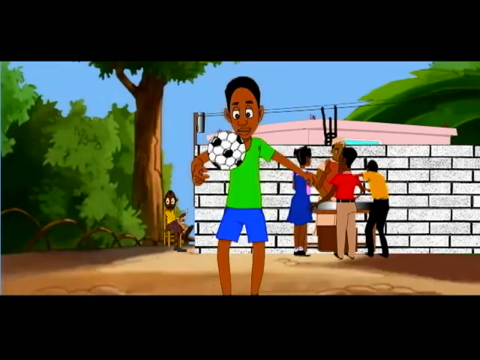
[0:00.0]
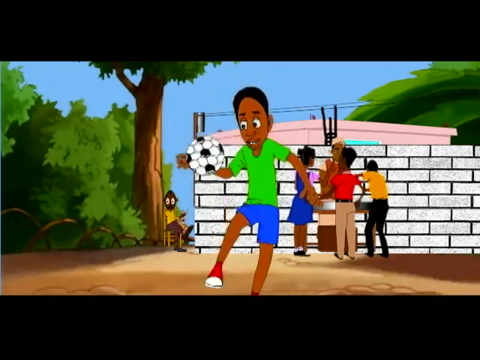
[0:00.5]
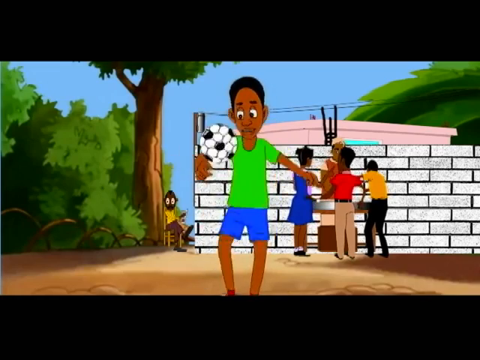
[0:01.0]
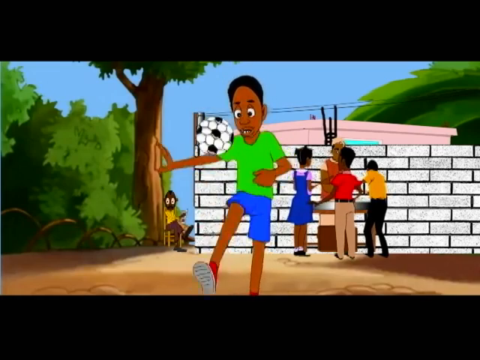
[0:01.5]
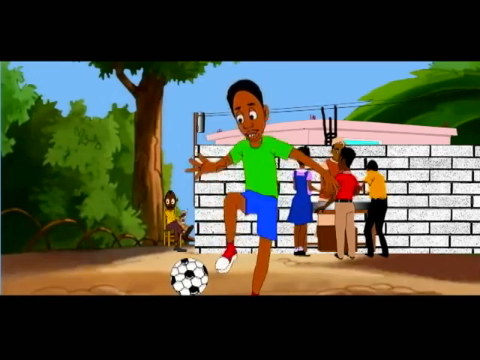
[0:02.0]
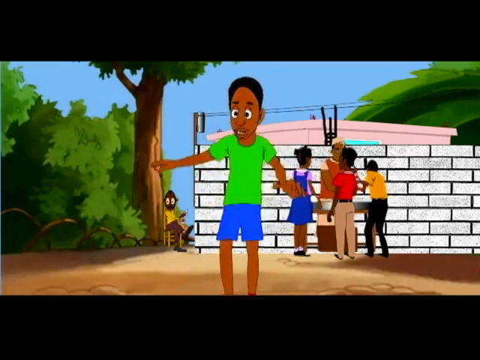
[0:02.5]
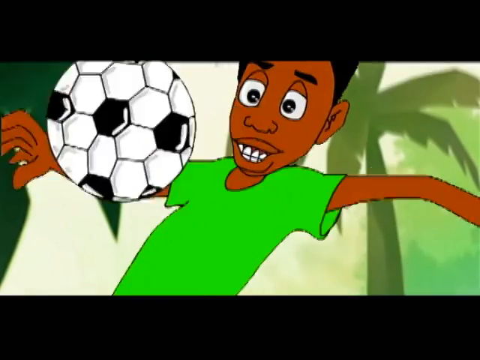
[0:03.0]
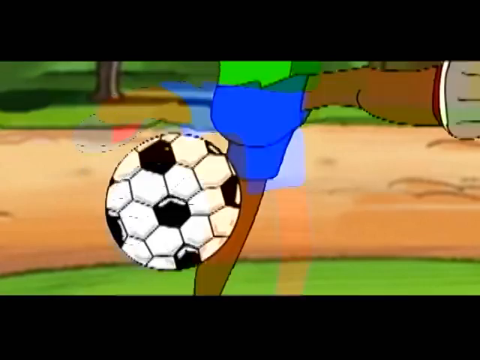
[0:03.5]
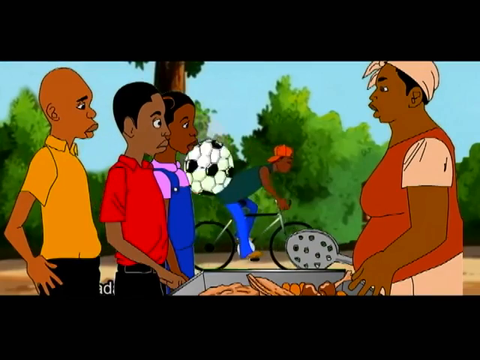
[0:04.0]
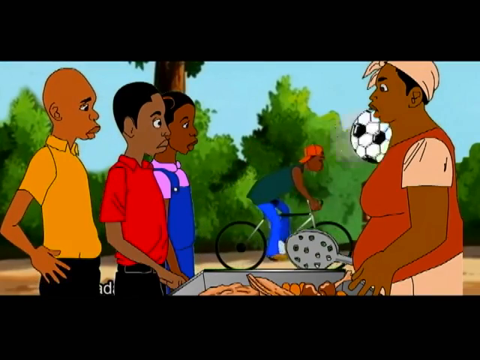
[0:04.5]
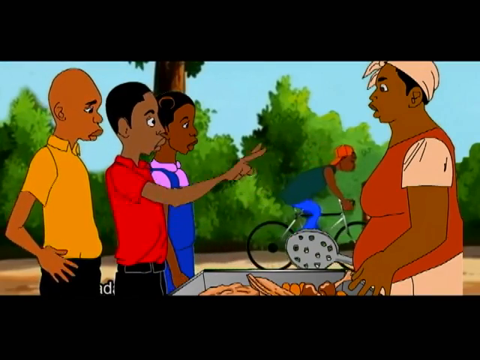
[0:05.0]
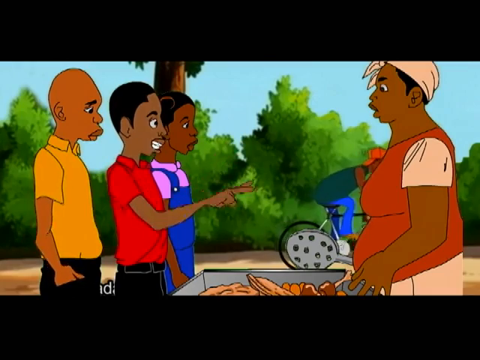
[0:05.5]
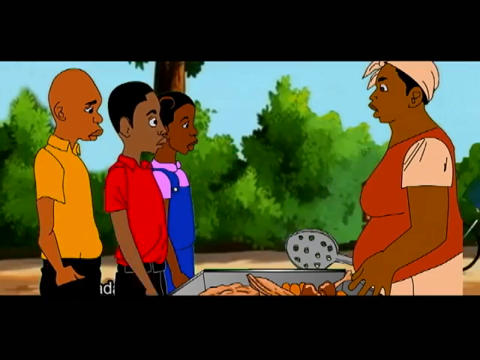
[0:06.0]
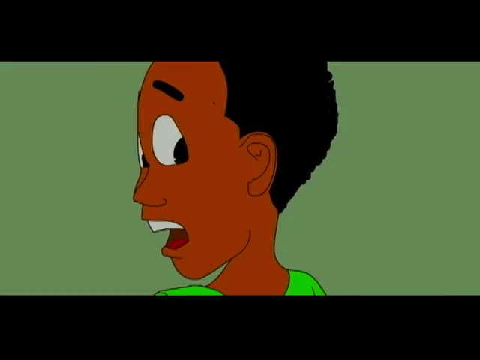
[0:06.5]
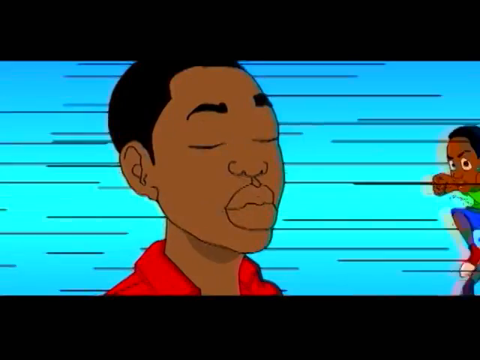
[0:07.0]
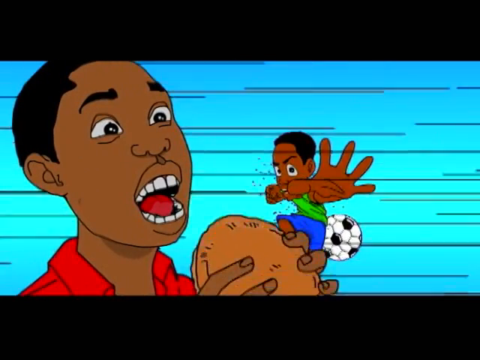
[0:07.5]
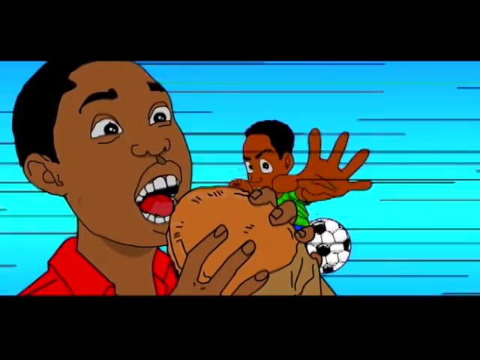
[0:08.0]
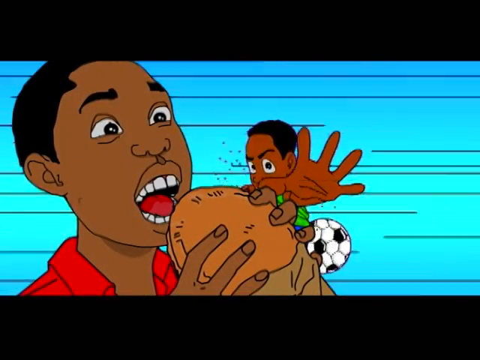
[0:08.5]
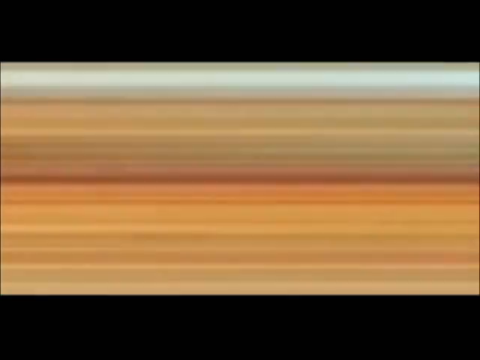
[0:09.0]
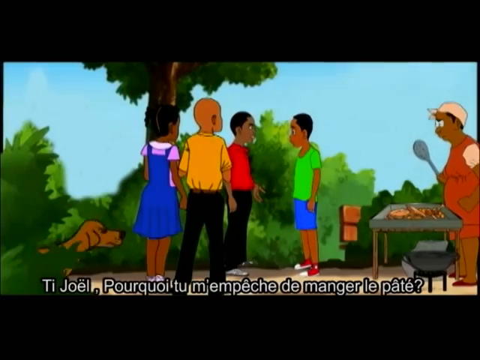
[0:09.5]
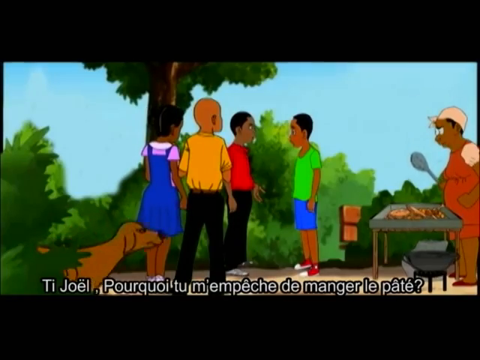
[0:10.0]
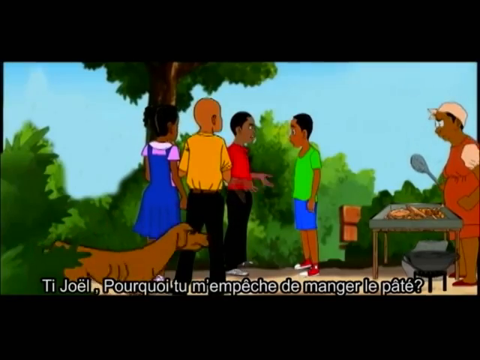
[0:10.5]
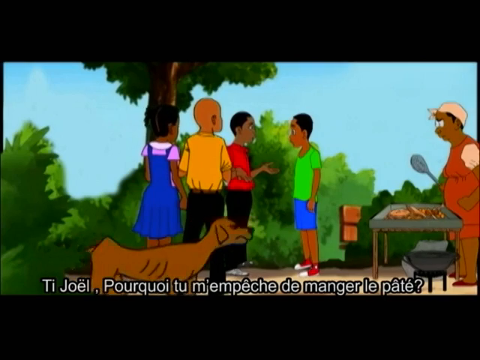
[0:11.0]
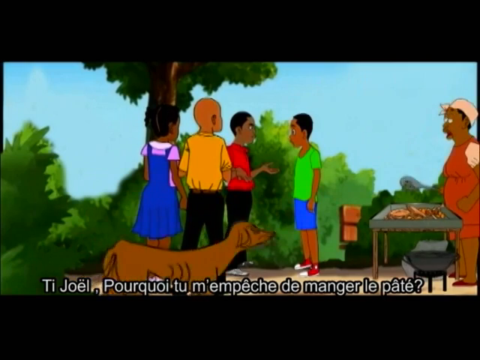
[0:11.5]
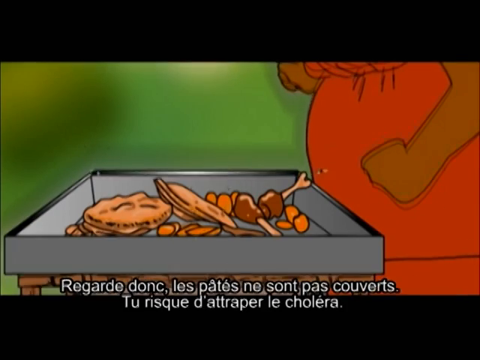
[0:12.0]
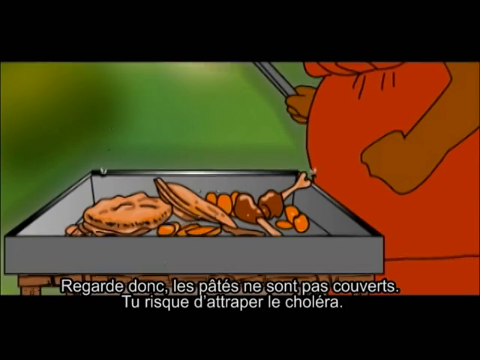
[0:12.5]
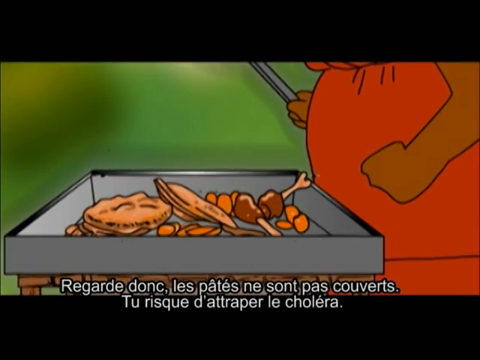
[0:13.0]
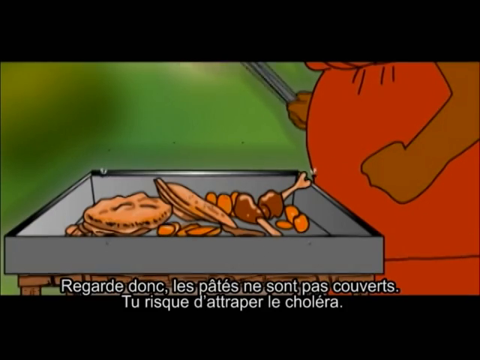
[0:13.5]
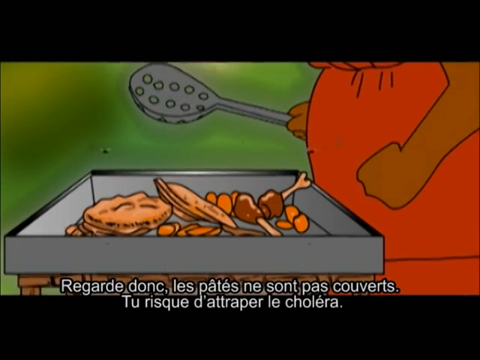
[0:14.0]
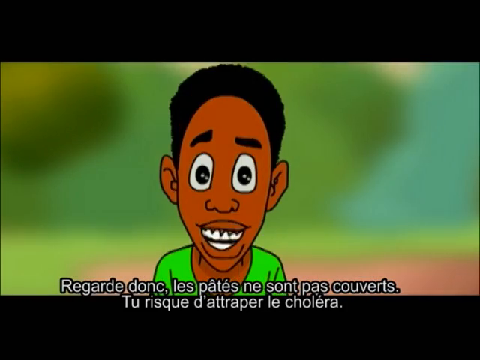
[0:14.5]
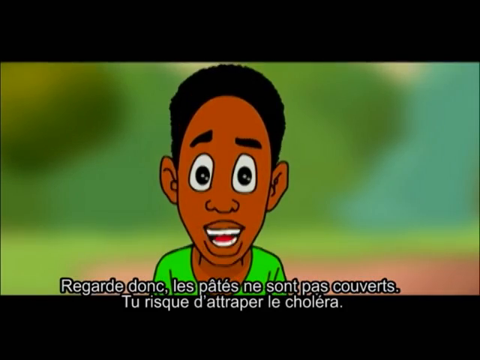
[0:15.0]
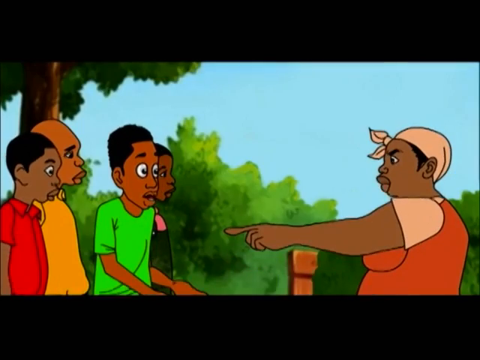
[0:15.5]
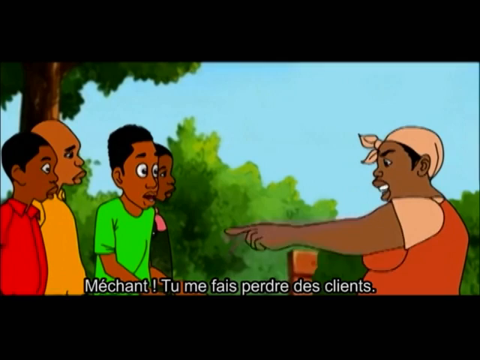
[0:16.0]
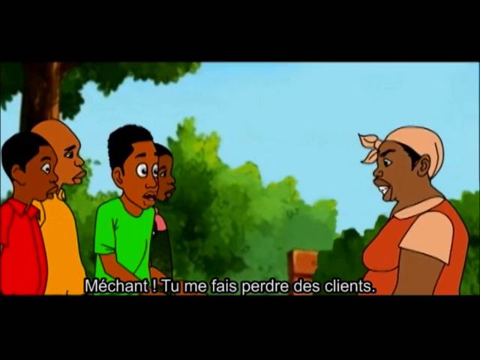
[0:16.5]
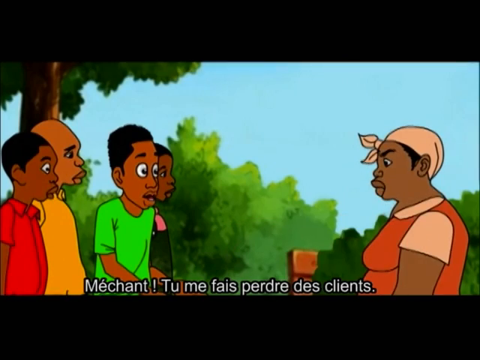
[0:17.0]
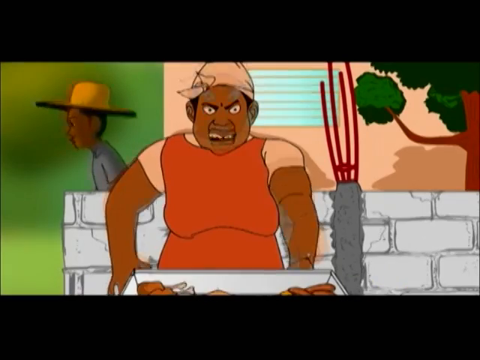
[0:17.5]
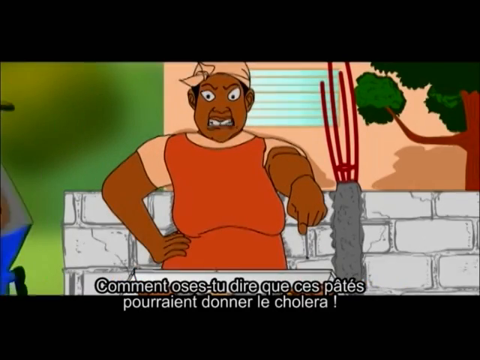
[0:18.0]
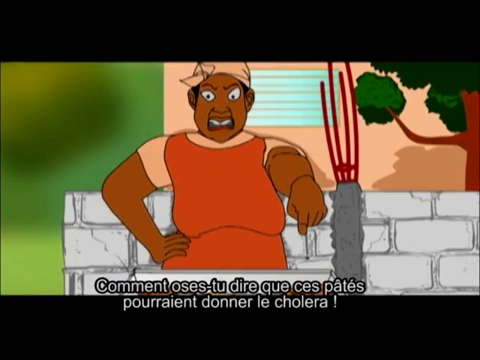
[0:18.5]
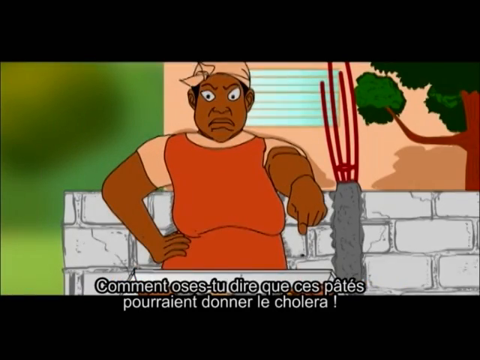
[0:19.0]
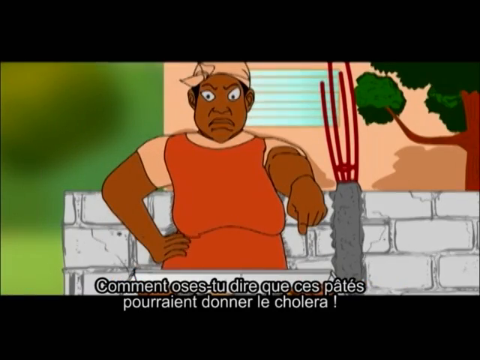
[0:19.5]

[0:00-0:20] The video is a cartoon. An African-American man in a green shirt, blue shorts, and red and white shoes is playing with a soccer ball. In the background there is a white brick wall and four people, three men and one woman, standing around a barbecue. One man wears a red shirt with beige pants, another man wears a yellow shirt with black pants, and the man behind the barbecue wears an orange shirt. The woman wears a blue dress with a purple shirt underneath. To the left of the wall, a man in a yellow shirt and brown pants is sitting in a chair next to a tree. The man at the front plays with the soccer ball and then kicks it. The people by the barbecue are shown talking to each other. The man with the soccer ball then gets startled, and the scene switches to an image of that same man reaching out with his hand toward the other man, who is eating a burger, against a dynamic blue background. He slaps the burger out of the man's hand. Back in the regular environment, the man in the green shirt who was playing with the soccer ball is talking to the man in the red shirt, and there is a dog in the front. The view zooms in on the barbecue, showing various food items that look like burgers, nuggets and drumsticks, followed by a close-up of the man in the green shirt talking. The person behind the barbecue becomes very angry and animated, pointing at everyone.